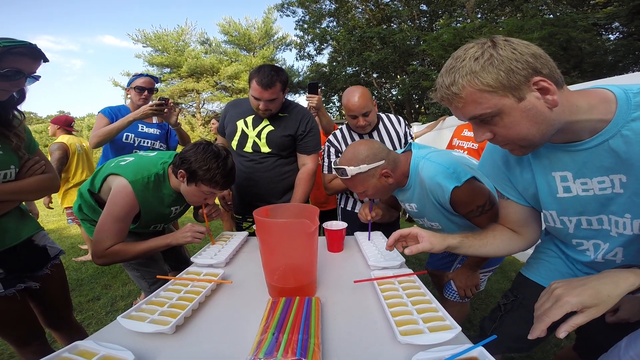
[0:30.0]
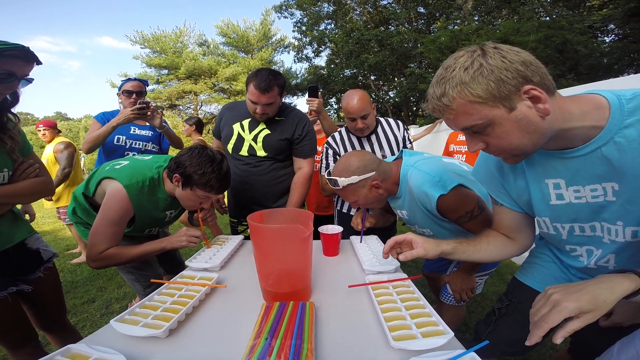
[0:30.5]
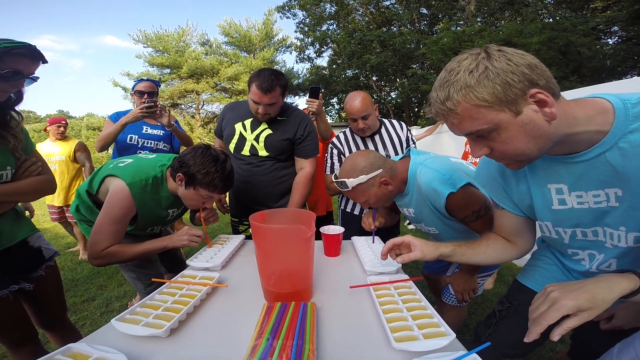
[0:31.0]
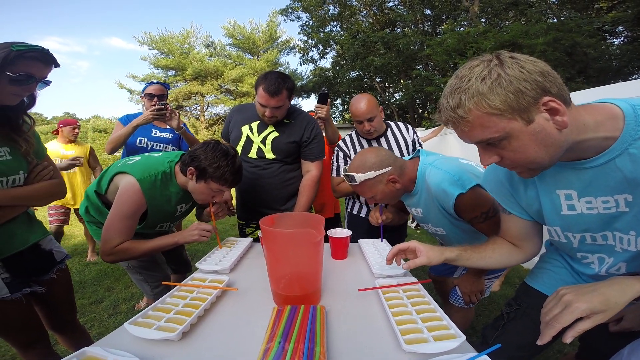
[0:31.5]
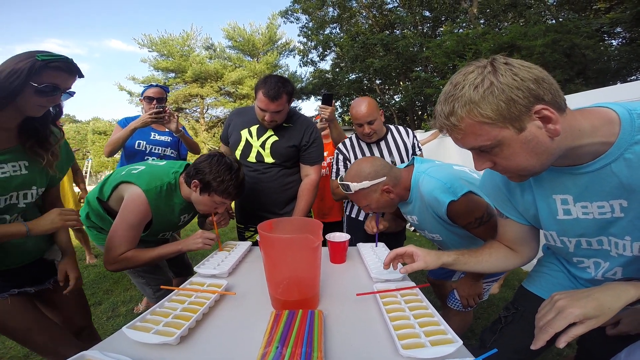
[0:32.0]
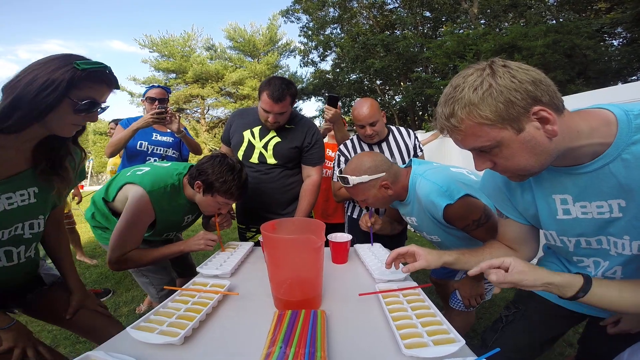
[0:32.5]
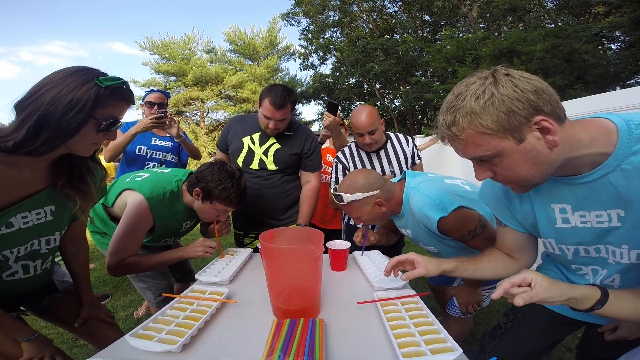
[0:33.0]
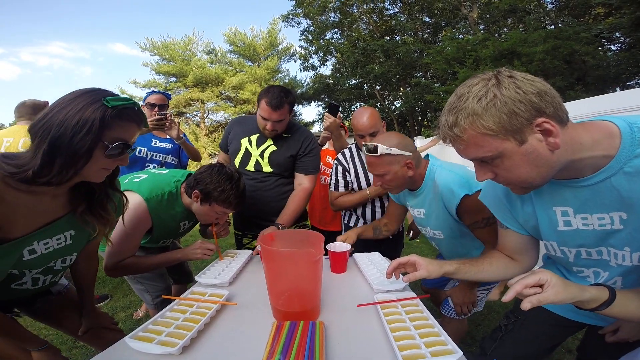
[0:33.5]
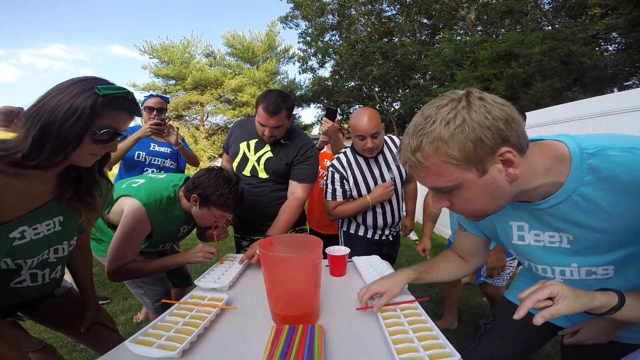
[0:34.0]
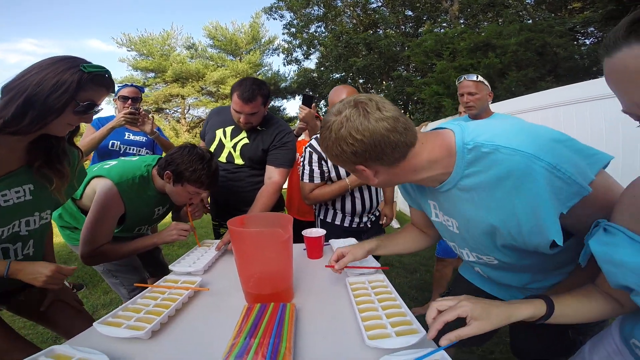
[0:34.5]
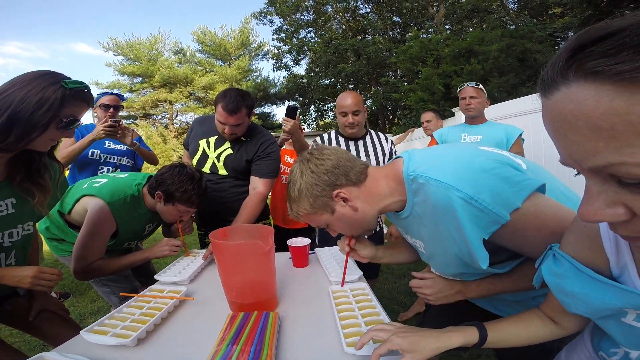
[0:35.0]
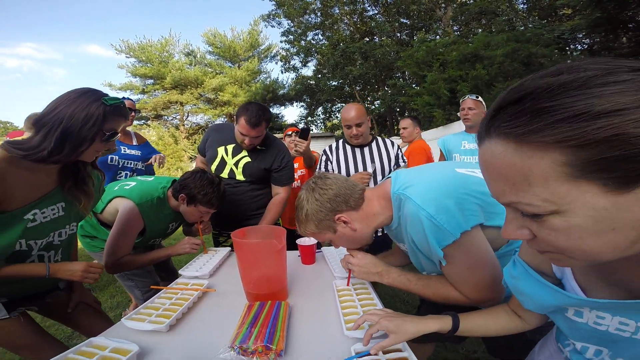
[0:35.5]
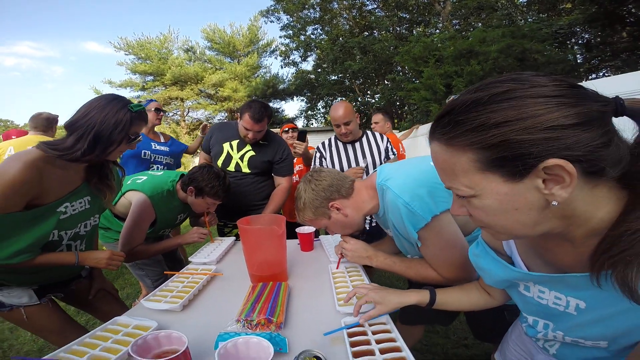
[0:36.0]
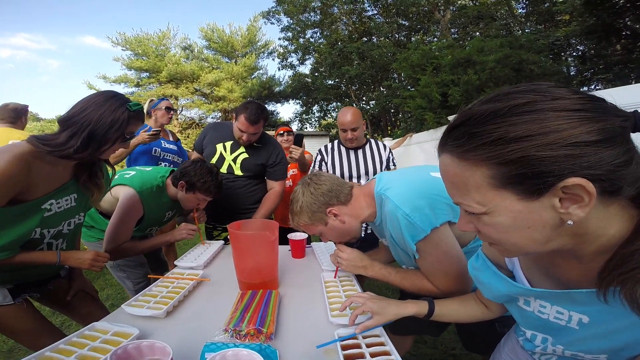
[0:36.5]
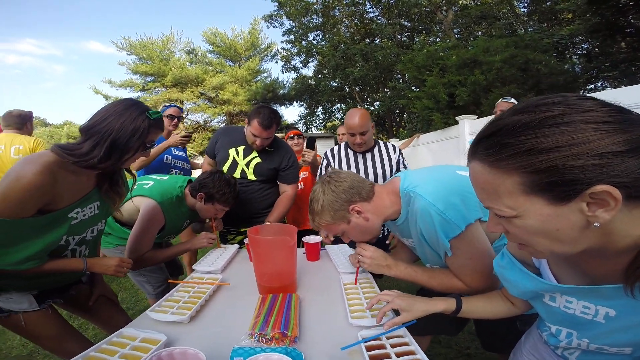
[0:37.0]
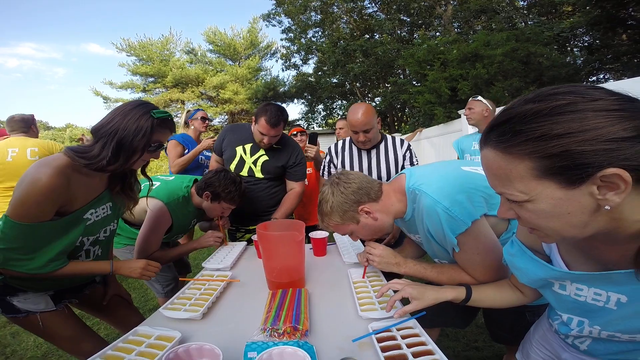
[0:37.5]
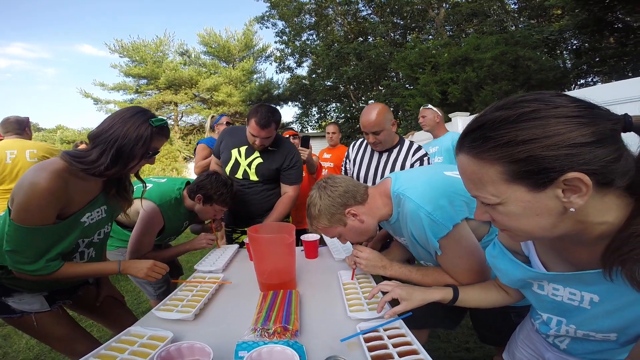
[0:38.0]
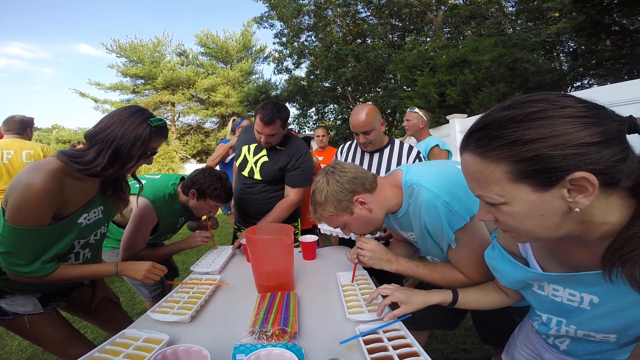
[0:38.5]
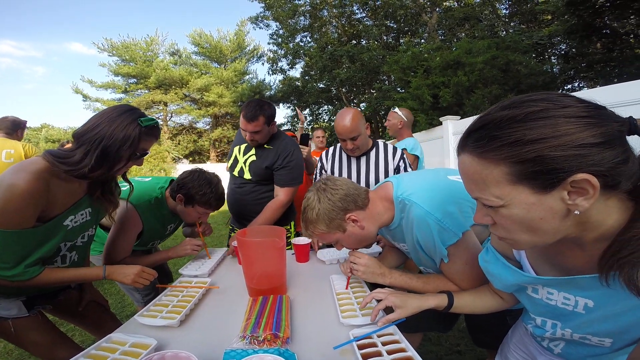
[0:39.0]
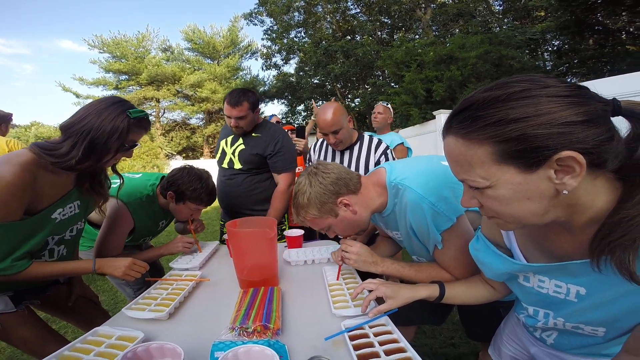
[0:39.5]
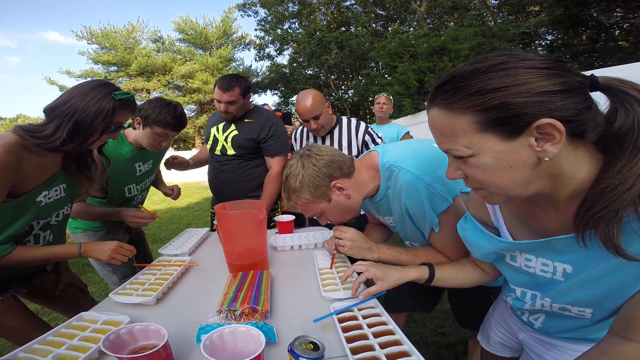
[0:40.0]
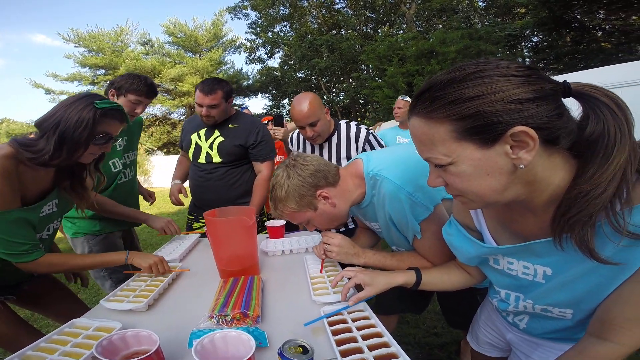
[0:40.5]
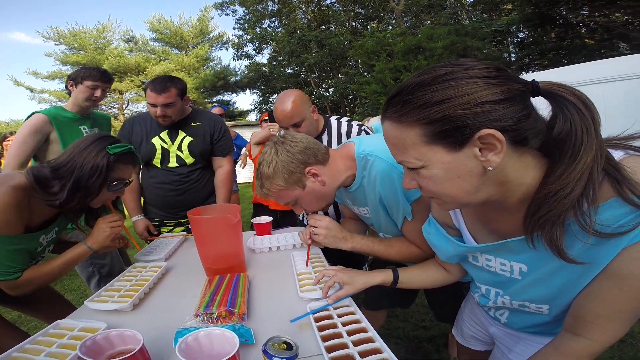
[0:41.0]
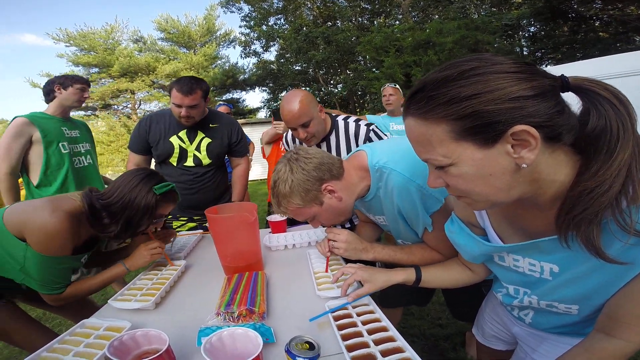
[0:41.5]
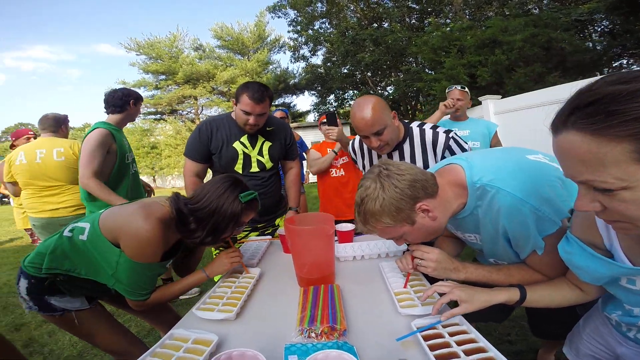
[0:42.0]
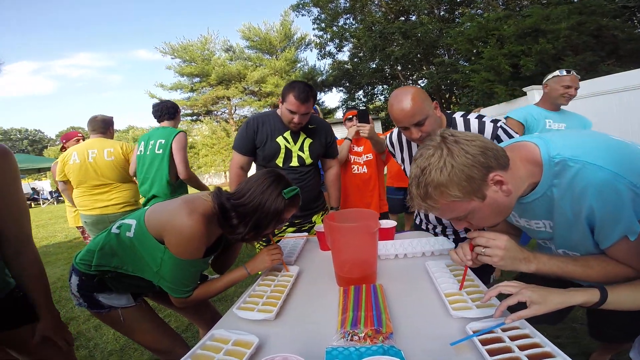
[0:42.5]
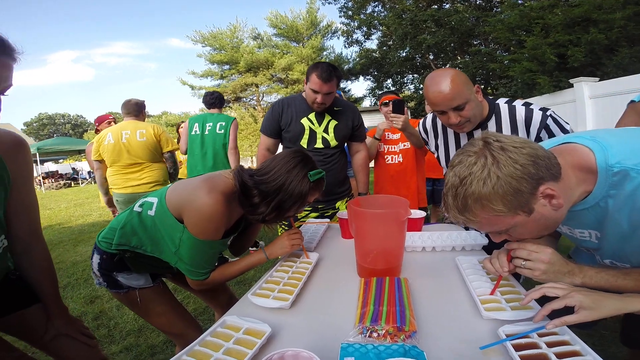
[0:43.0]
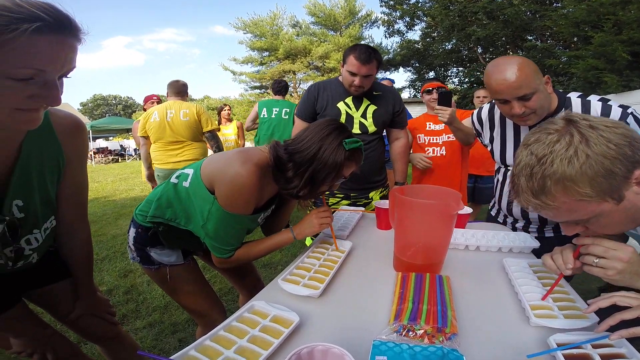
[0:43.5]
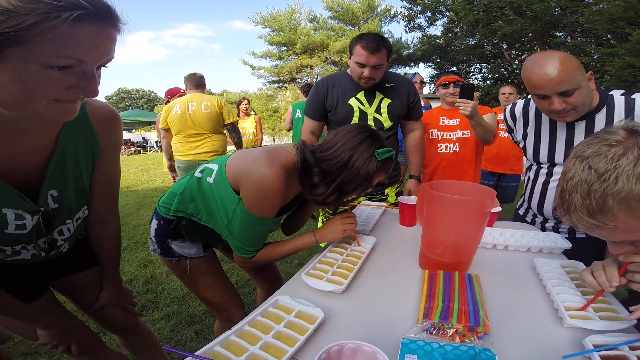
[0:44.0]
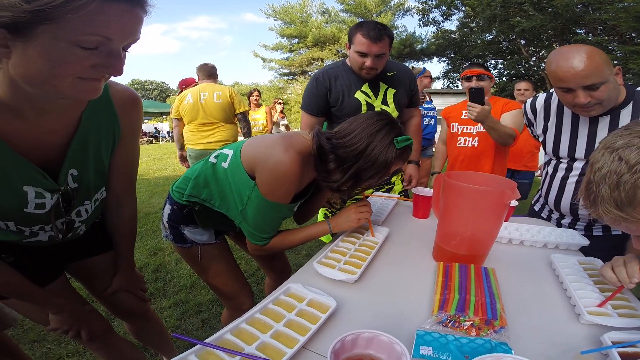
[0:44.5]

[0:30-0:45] In the same setting, the guy on the right, on the light blue team, apparently finishes first. He sets aside his tray and stands up, and the man to his left, closer to the camera, begins, almost like a relay race. With a red straw, he starts slurping the beer from the top right of his tray and moves across it. On the green team on the left, the guy finishes a little later, and then his partner to his right starts: a woman with kind of long dark hair and dark sunglasses, in the same green T-shirt that says "Beer Olympics". The guy on the left who finished second walks away looking kind of disgusted, having been well behind the guy on the right. The second man on the light blue team almost finishes his entire first row before the woman across from him begins. Other teammates, closer to the camera on the left and right, wait to take their turn; both next in line are women, so the teams are a mixture of men and women. The referee is still leaning over watching carefully, and the guy in the black Yankees T-shirt watches as well.